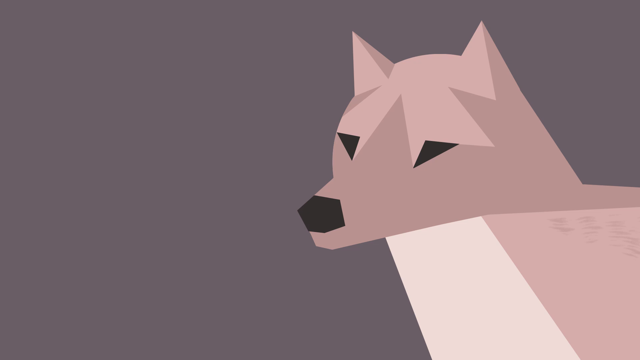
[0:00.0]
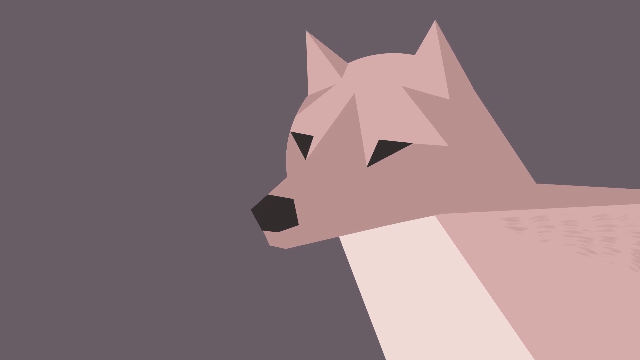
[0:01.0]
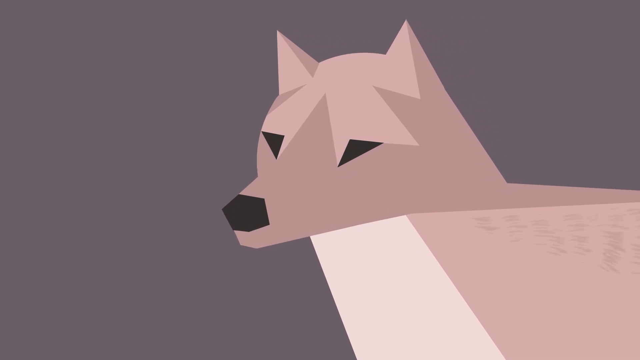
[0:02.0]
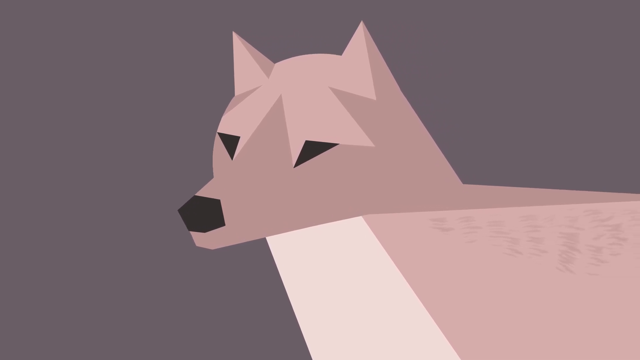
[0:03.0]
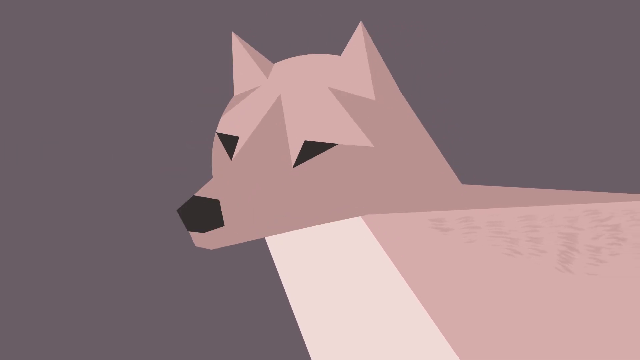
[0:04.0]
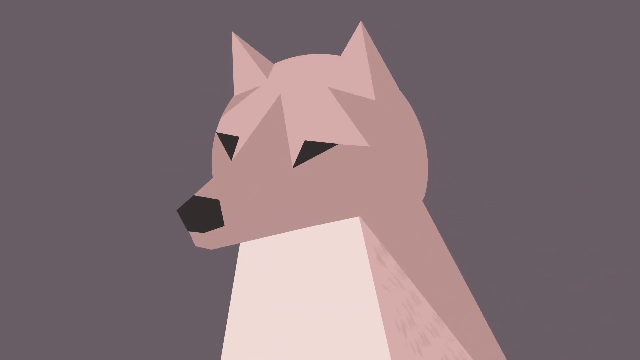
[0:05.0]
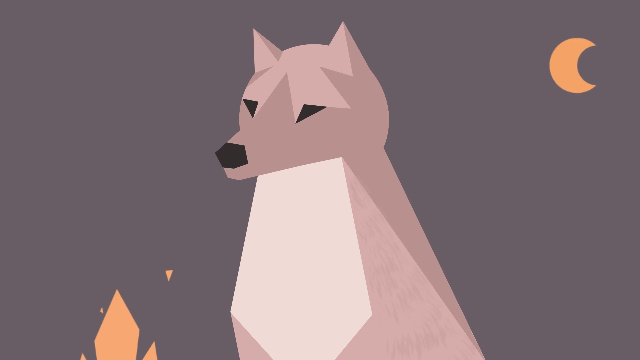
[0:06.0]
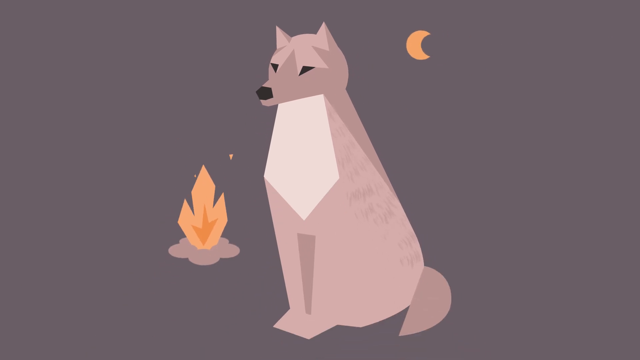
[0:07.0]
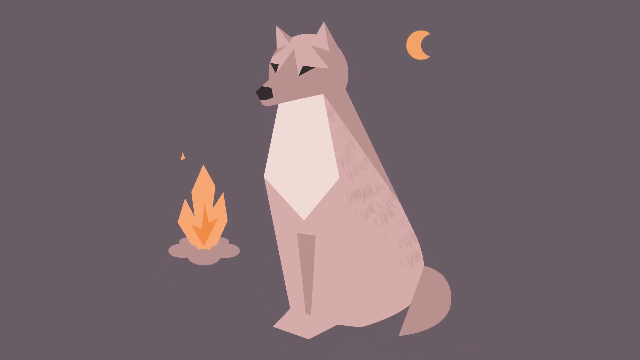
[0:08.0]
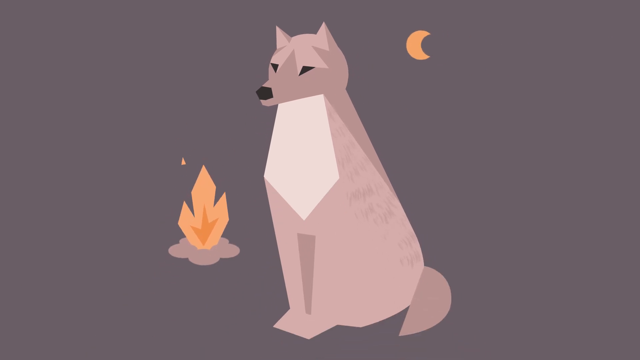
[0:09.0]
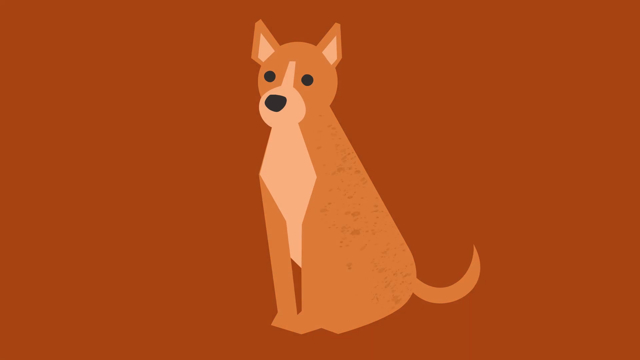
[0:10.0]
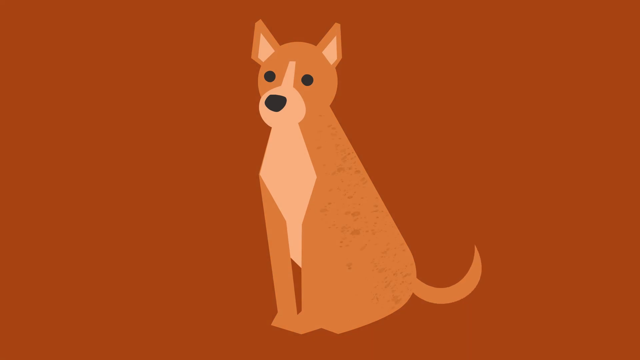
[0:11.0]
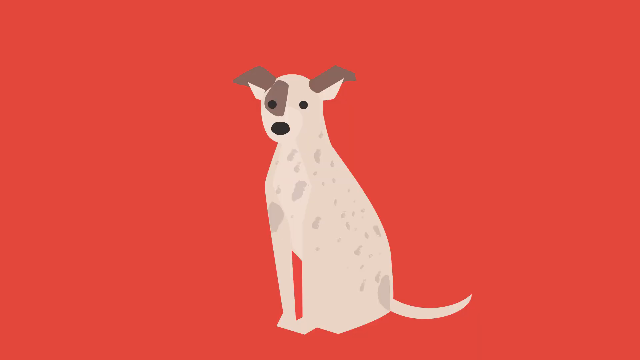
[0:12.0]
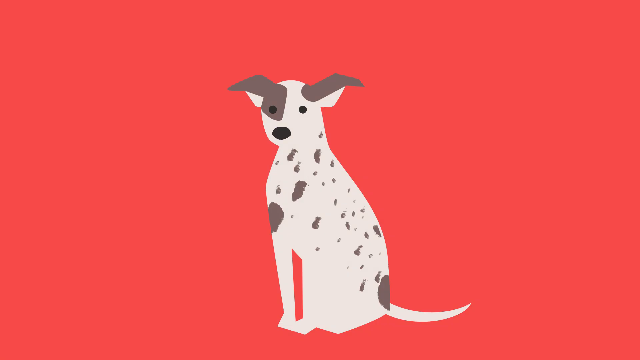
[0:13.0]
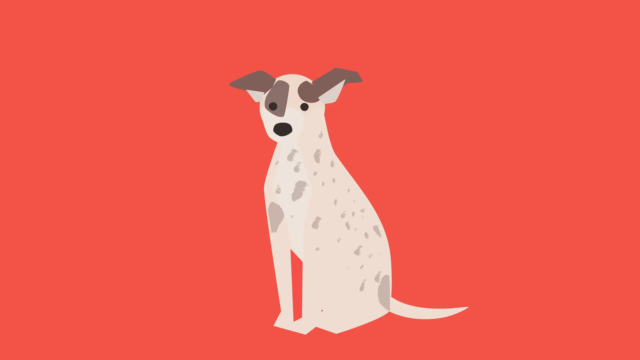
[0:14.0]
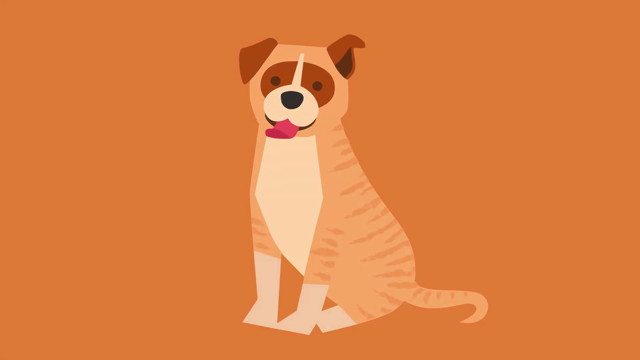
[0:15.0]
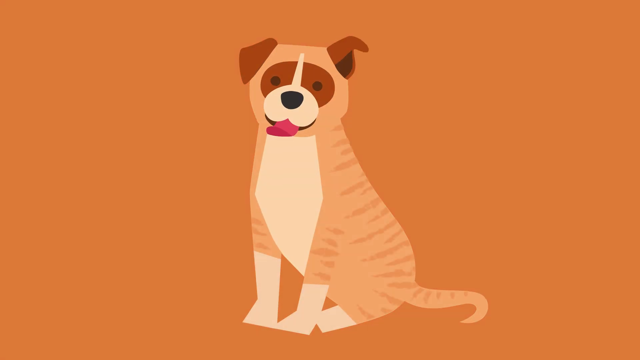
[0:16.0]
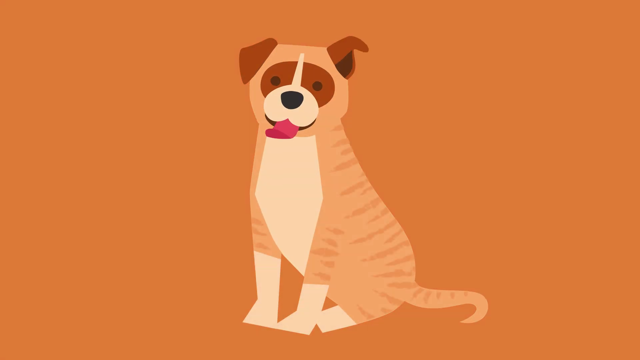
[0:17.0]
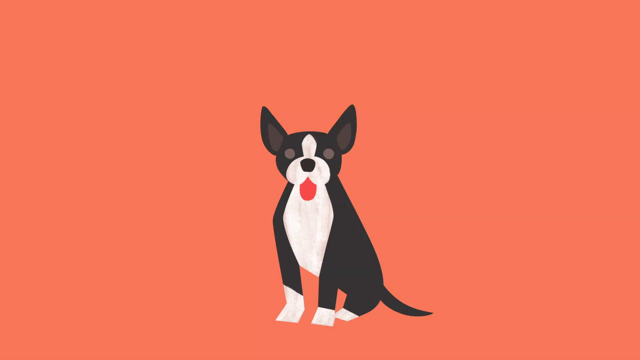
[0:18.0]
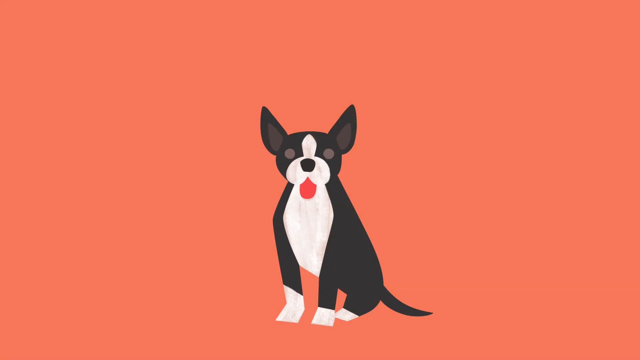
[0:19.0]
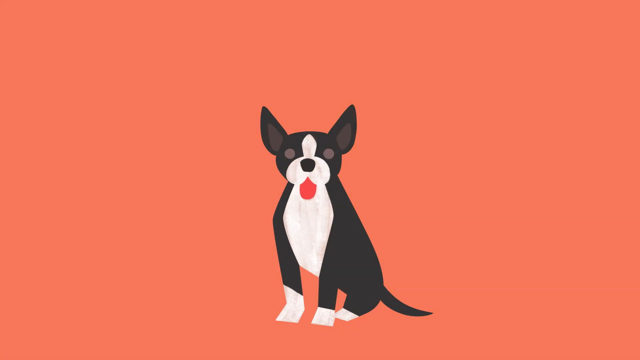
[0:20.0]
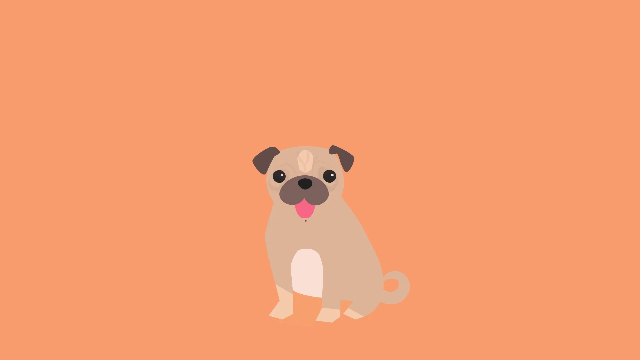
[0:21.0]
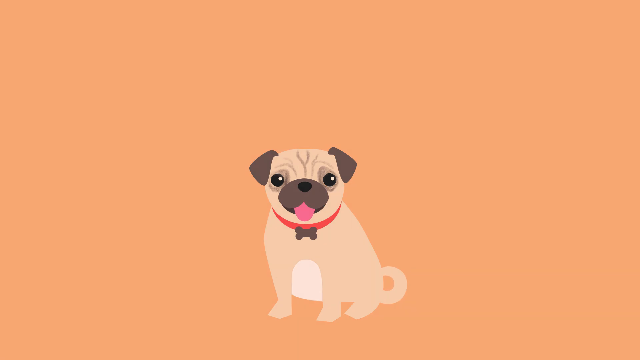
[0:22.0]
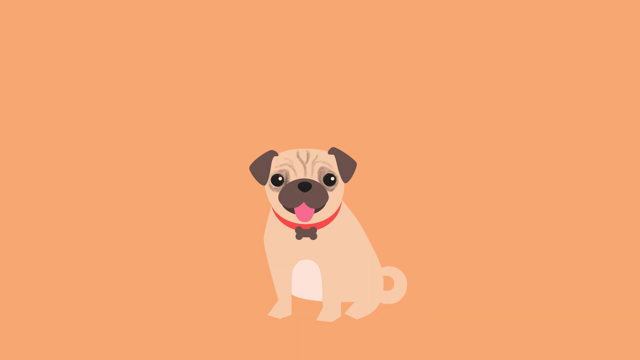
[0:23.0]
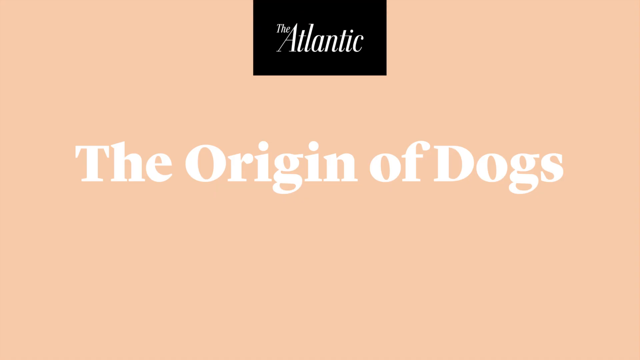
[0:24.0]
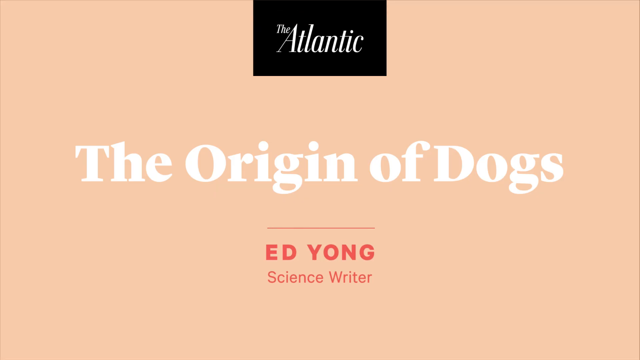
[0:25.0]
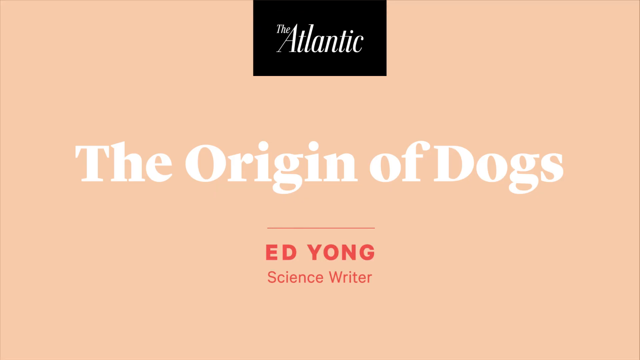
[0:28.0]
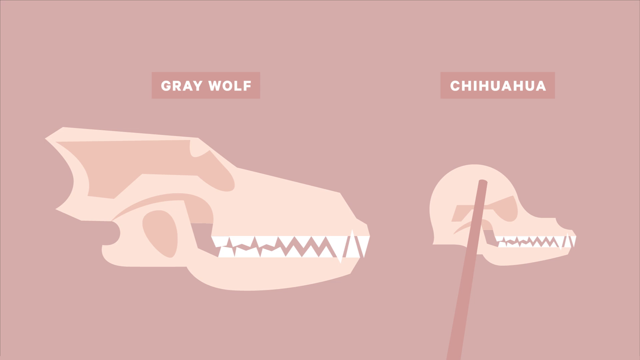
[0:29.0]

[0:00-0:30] The video opens on a minimalist picture of a dog or perhaps a fox with pointed ears, set against a kind of grayish-brown background. The animal has a white belly and reddish-brown fur. The camera pans from the left of the screen to the right as it focuses on the animal's face. A piece of meat flies toward its face and it catches it in mid-air, then sits down. The camera zooms out, showing the animal sitting next to a roaring campfire on its left (the viewer's right), with a crescent moon in the sky. The fox or dog then transforms into a picture of a modern-day dog, and the background changes from dark grayish to bright red. This dog has a similar red coat, but its tail is curled, its snout and eyes are more rounded, its ears are larger and more angled but not necessarily pointed, and its fur is short and less shaggy. It wags its tail while sitting in the same position as the fox. That dog then turns into an illustration of another dog sitting in the same position, this one white-furred and spotted, with a far less curled tail, beadier eyes, and larger, droopier ears. Next comes a dog with a shorter snout, an open mouth, a less curled tail, a wagging tongue, shorter but floppier ears, and a striped pattern over its back. It then changes into a much smaller illustrated dog with a black coat, white underbelly, white paws, a shorter tail, larger and more angled ears, a wagging tongue, and a more rounded snout with more jowls on the side. Next is a dog that appears to be a pug, very small with a short, curly tail, very short legs, a very smushed and wrinkled face, black beady eyes, and floppier ears; it wears a red collar with a bone icon in the center. The scene changes to an illustration of the origin of dogs with the Atlantic logo at the top center of the screen and white lettering; at the bottom center, red lettering reads "Ed Young, science writer." Finally, the scene changes to two illustrated skulls, a gray wolf on the left and a chihuahua on the right, showing the difference between the two.